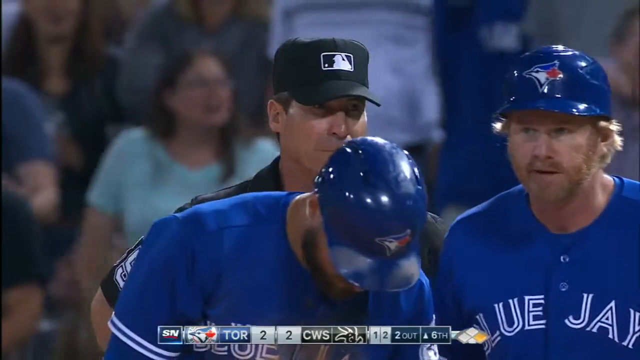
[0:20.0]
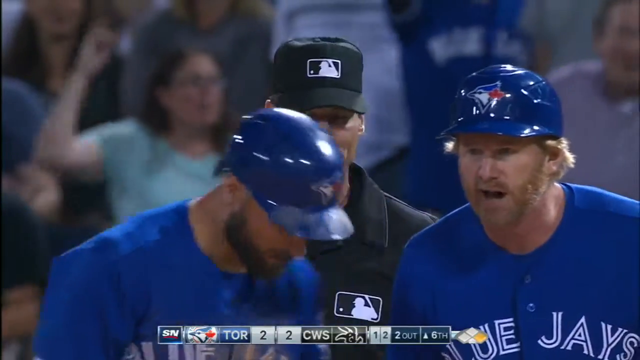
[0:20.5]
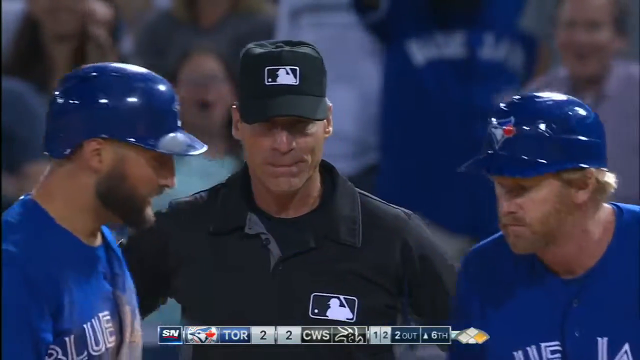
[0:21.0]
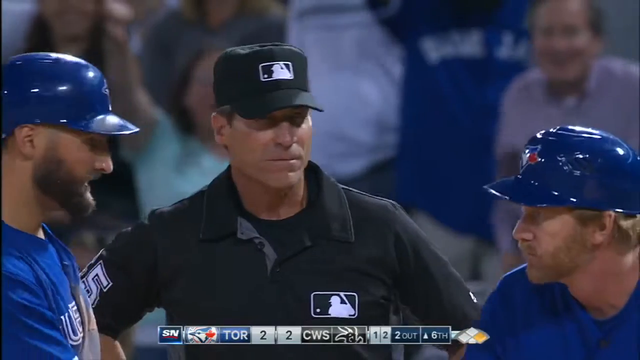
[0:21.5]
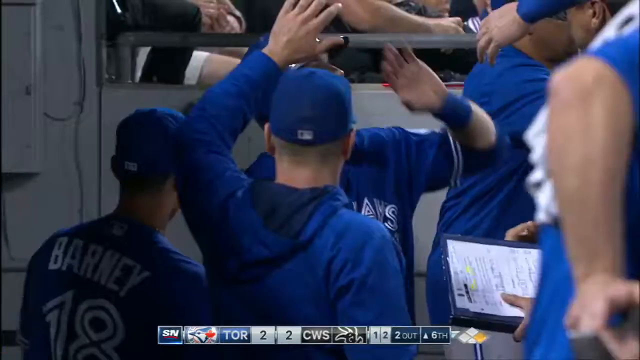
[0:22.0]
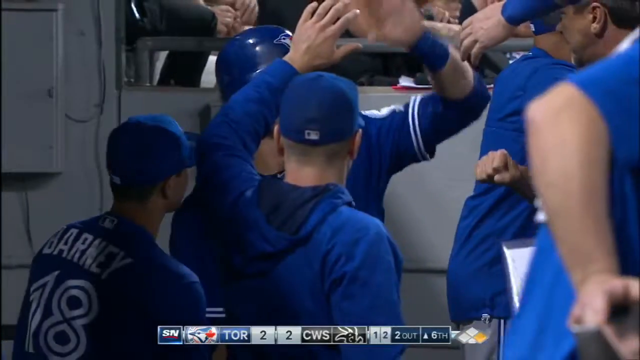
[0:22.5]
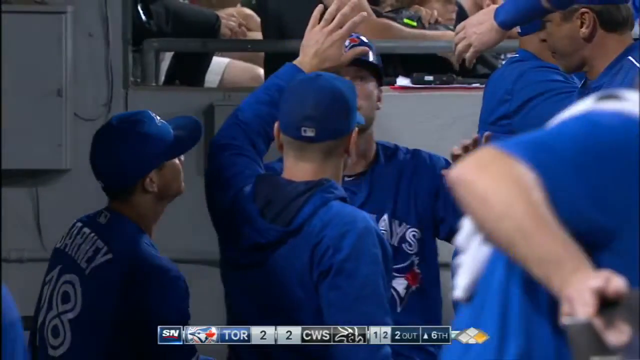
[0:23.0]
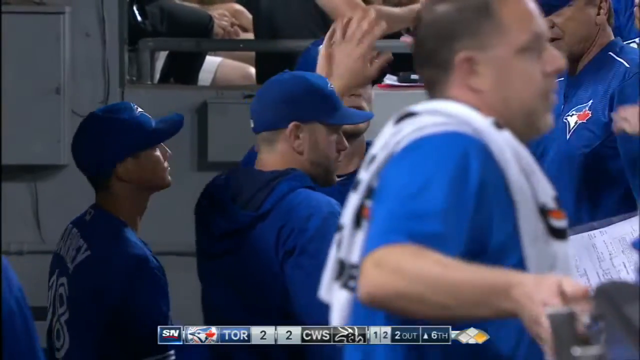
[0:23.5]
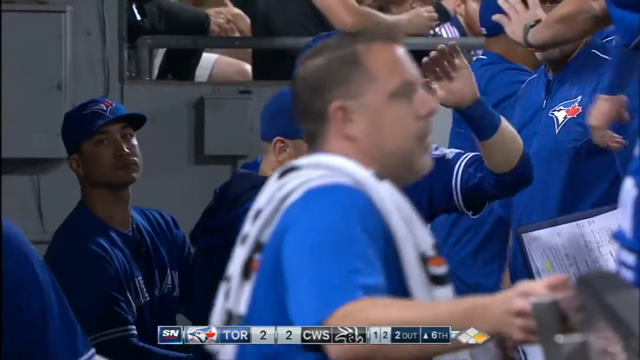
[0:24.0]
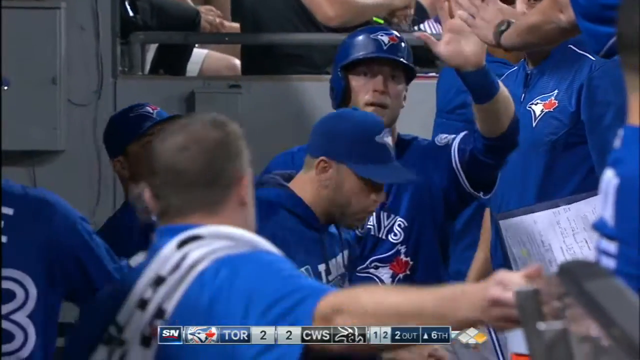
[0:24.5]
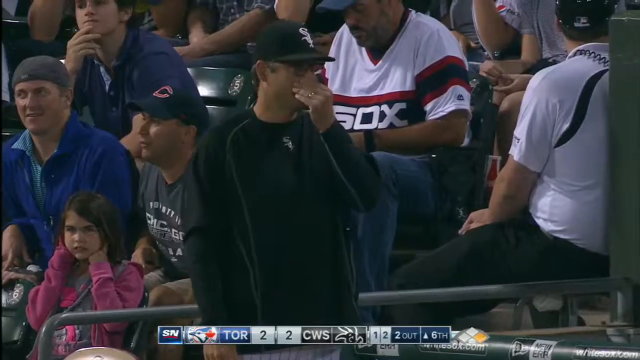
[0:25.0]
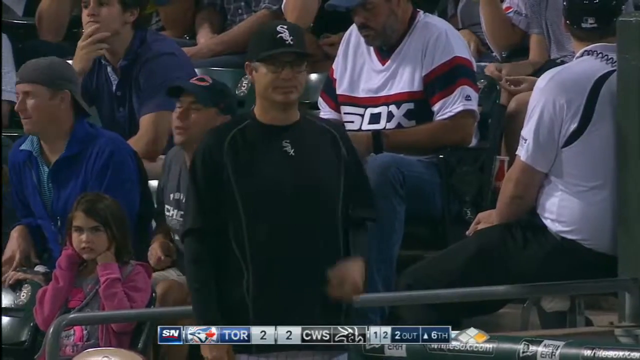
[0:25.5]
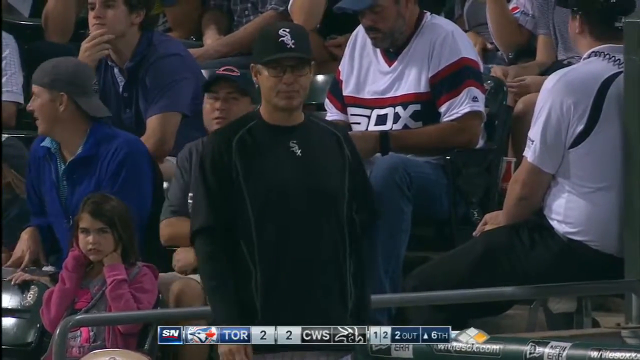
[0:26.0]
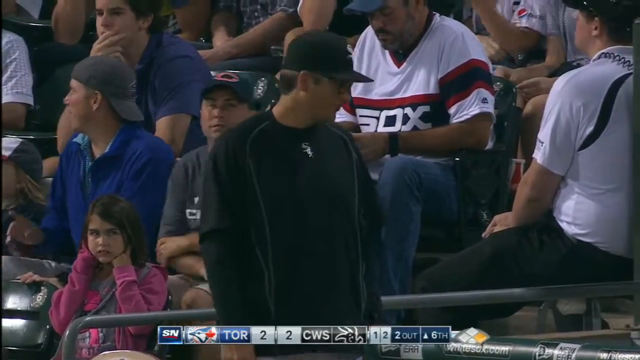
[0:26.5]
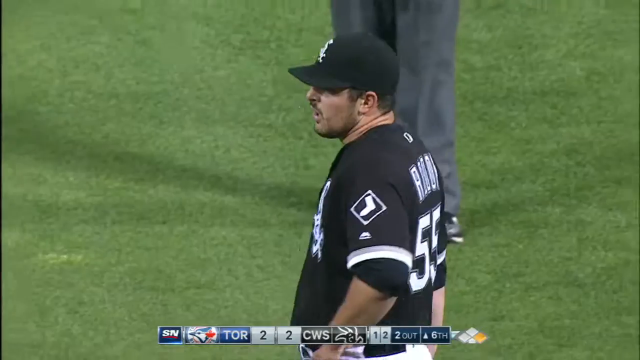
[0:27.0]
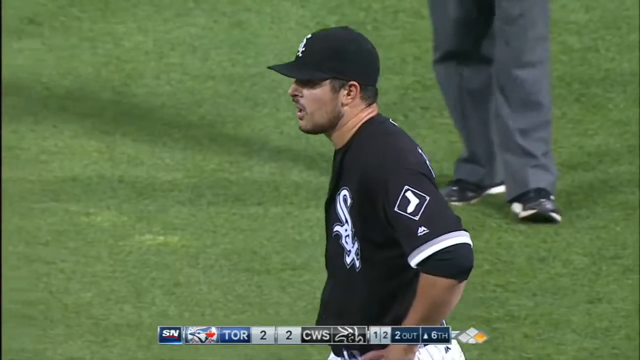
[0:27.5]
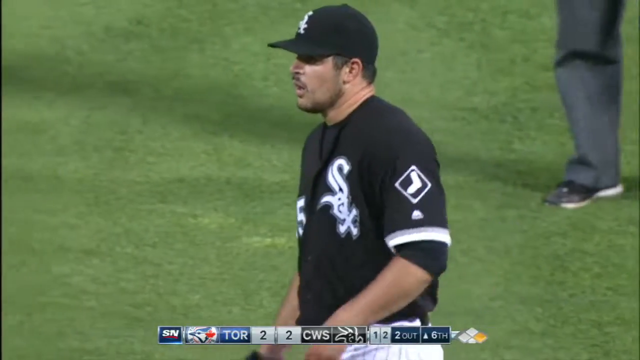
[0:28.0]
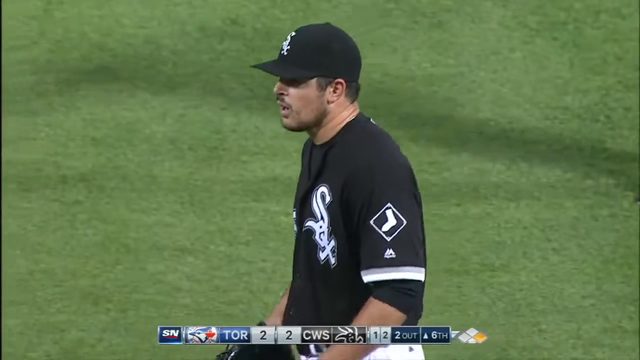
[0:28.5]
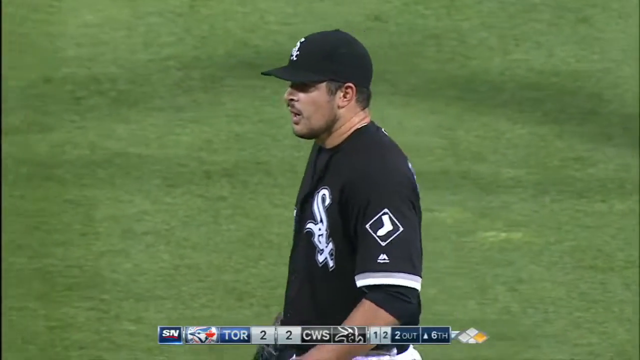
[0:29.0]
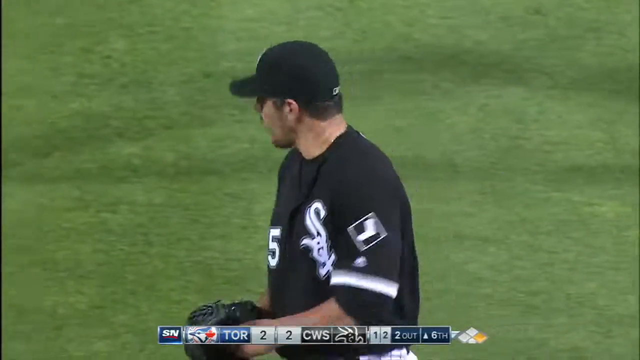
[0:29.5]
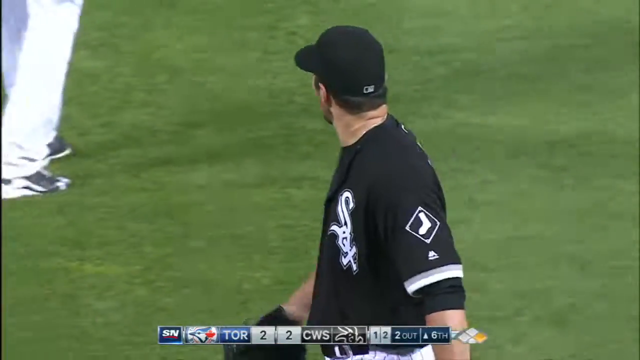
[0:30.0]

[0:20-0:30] Two Toronto Blue Jays players stand in front of the umpire against a background of fans in the stands. In the blurred background on the left, a woman in a light blue short-sleeved t-shirt raises her right arm. The player on the left wears a batting helmet and a beard; the player on the right also has a beard and a batting helmet. Both are speaking in front of the umpire, who holds his lips together so they appear quite thin. The scene changes to a Blue Jays player being congratulated with high-fives by people in his dugout as he moves toward the camera. A White Sox coach in a black sweatshirt and black hat then stands in the dugout, looking a bit unhappy. Another White Sox player, clearly unhappy with how the play has turned out, walks from right to left against a green background; he may be a pitcher who has just given up a long ball or a home run.